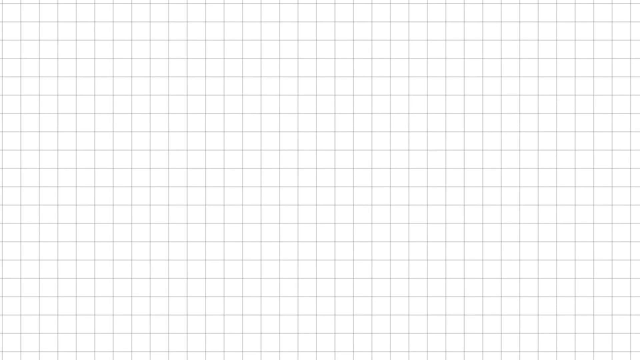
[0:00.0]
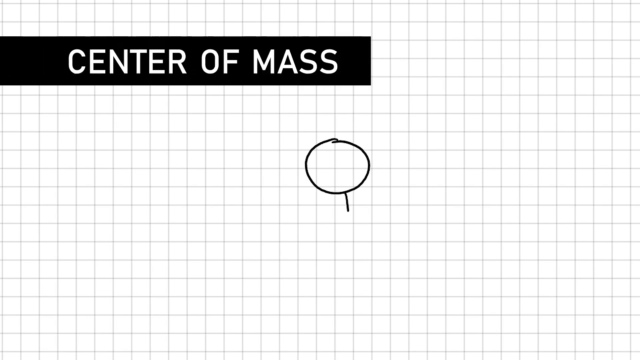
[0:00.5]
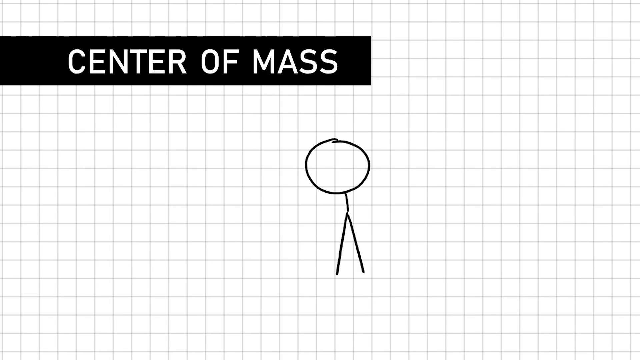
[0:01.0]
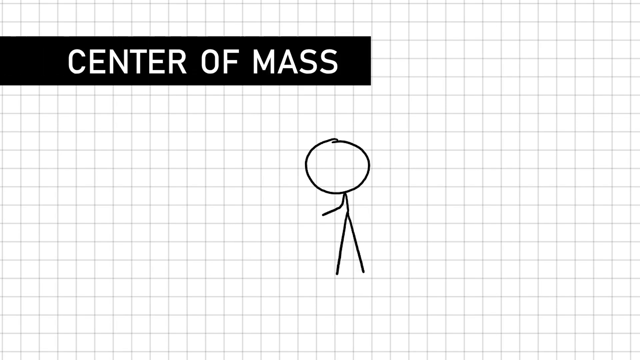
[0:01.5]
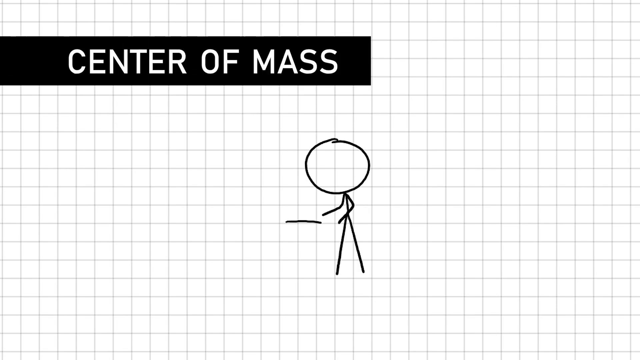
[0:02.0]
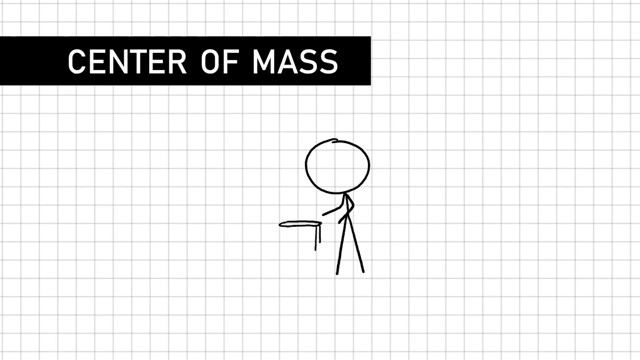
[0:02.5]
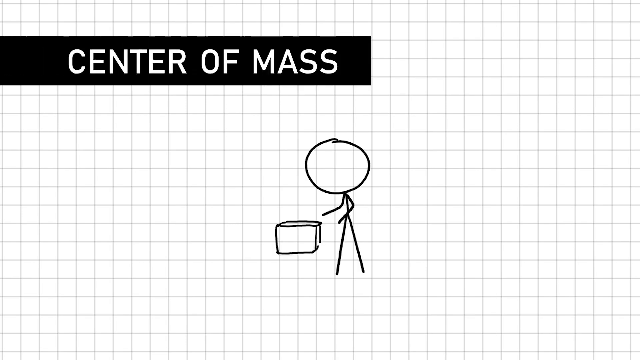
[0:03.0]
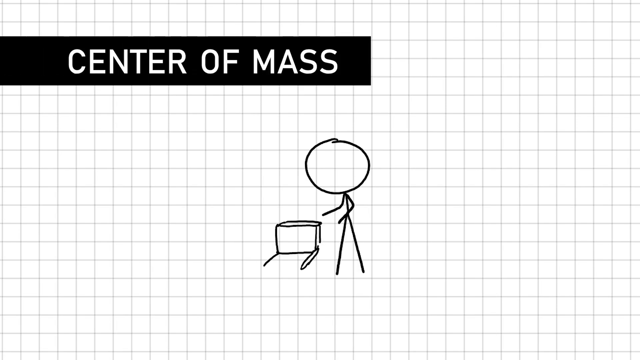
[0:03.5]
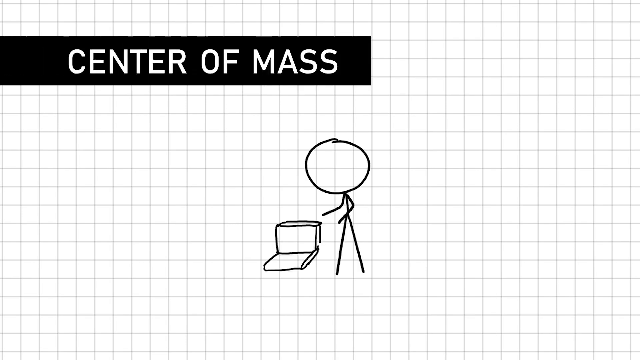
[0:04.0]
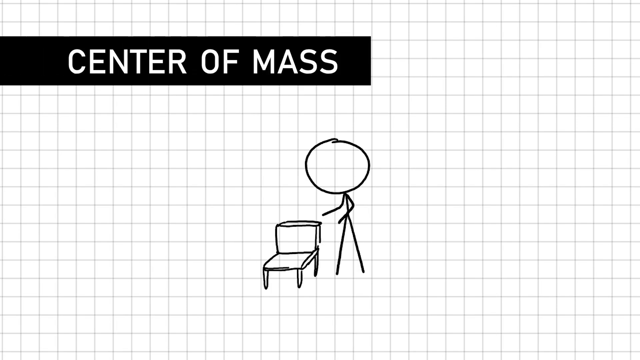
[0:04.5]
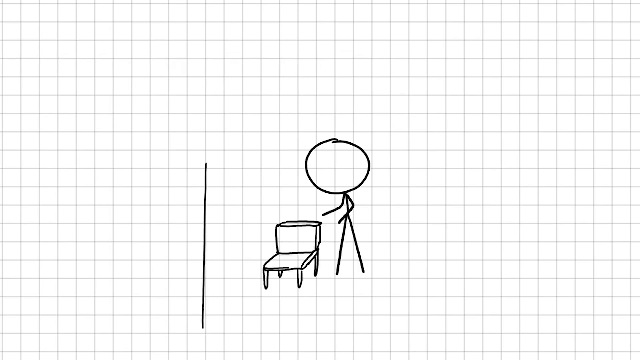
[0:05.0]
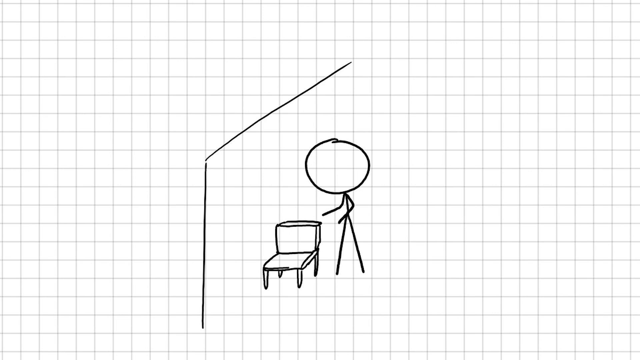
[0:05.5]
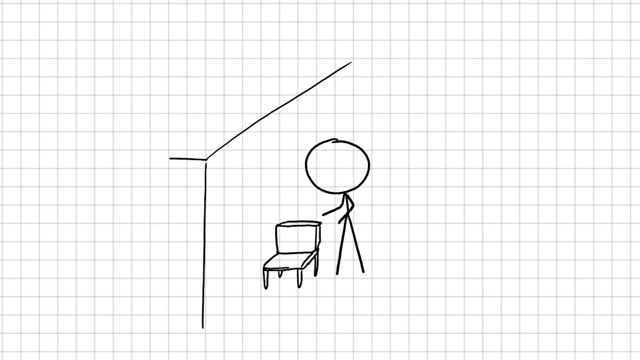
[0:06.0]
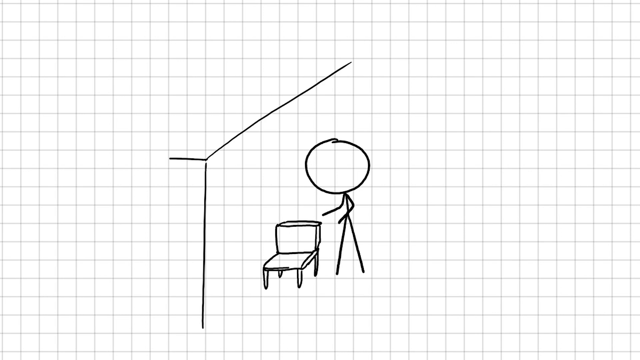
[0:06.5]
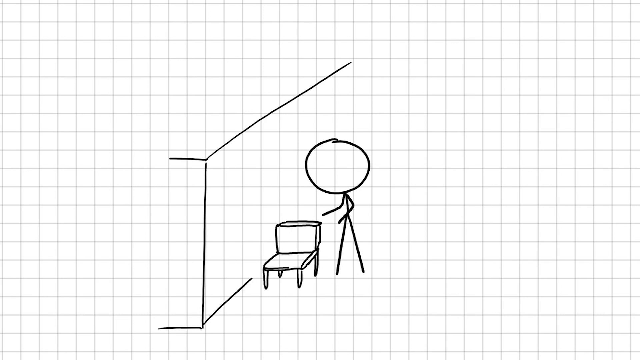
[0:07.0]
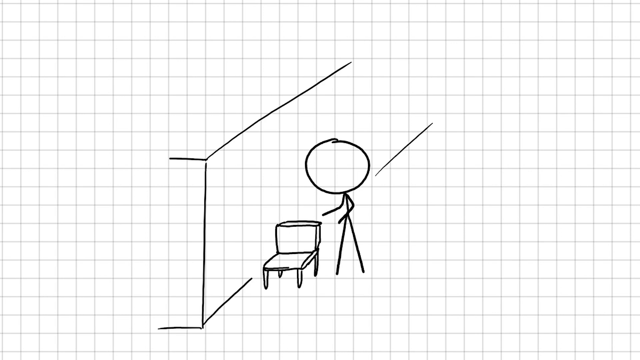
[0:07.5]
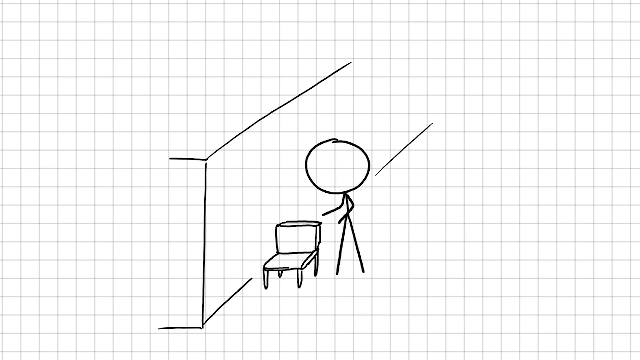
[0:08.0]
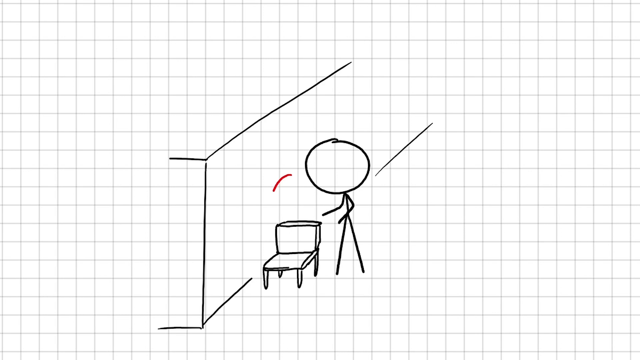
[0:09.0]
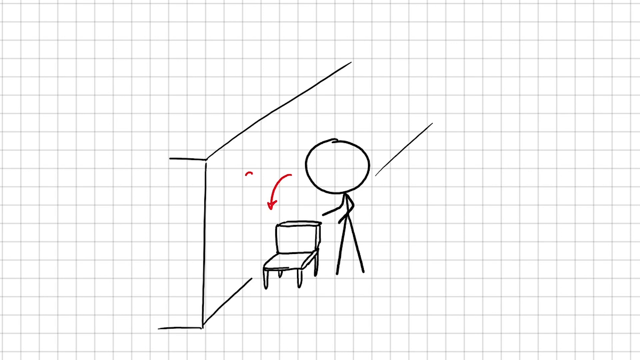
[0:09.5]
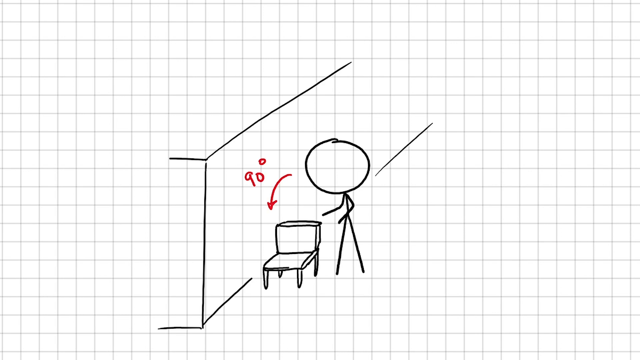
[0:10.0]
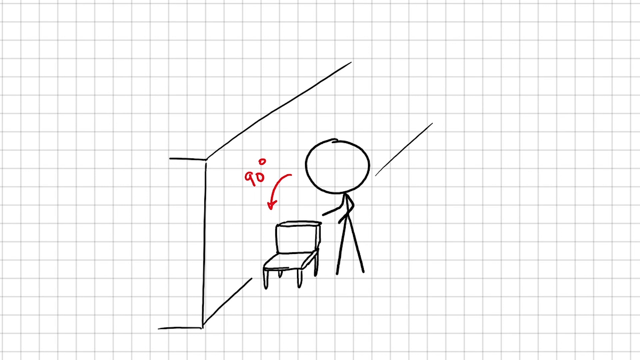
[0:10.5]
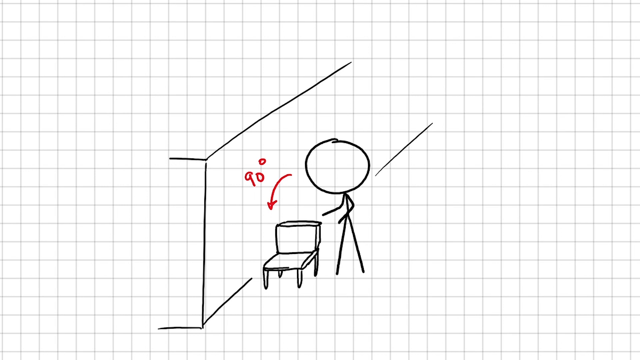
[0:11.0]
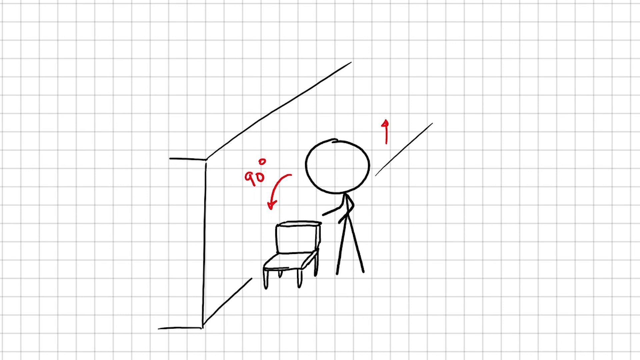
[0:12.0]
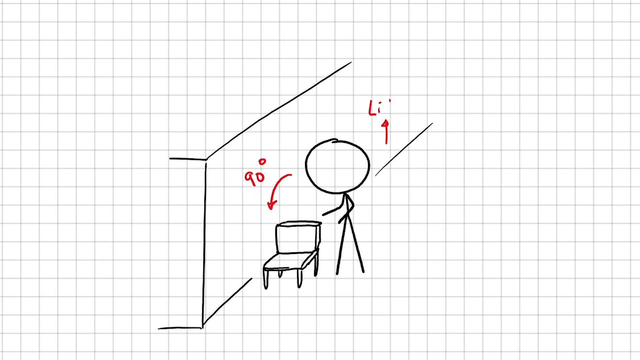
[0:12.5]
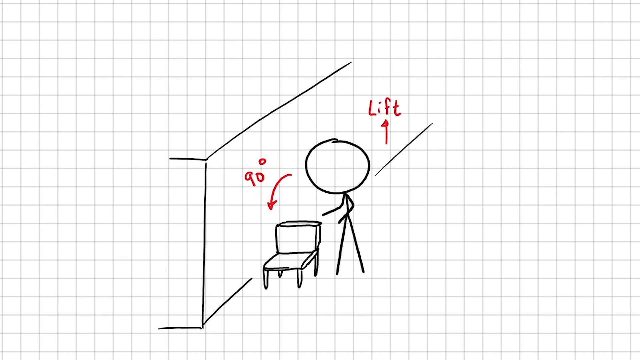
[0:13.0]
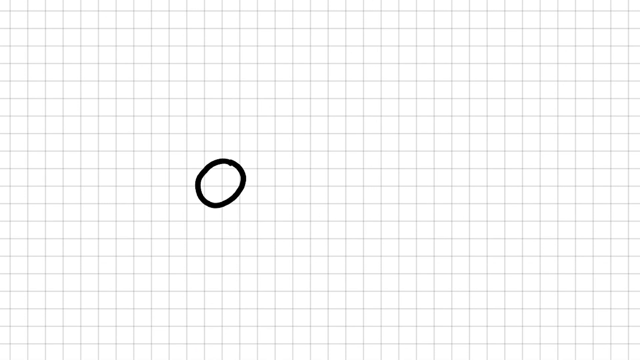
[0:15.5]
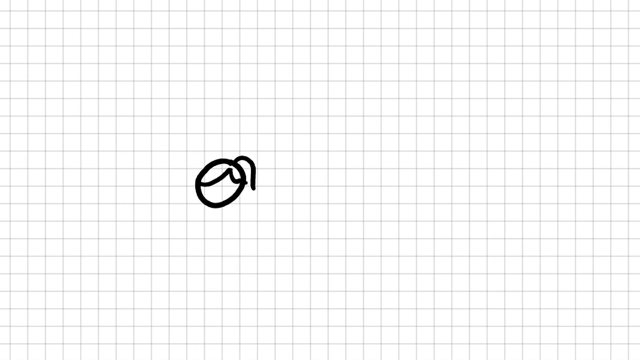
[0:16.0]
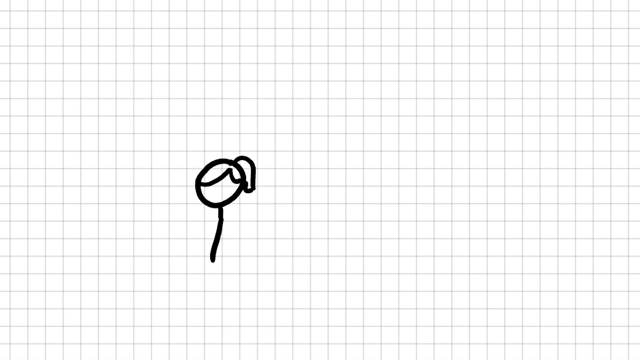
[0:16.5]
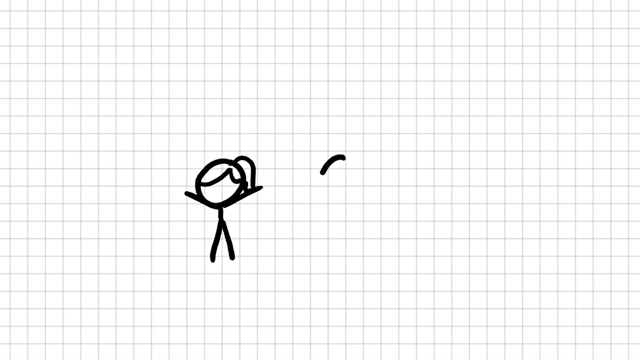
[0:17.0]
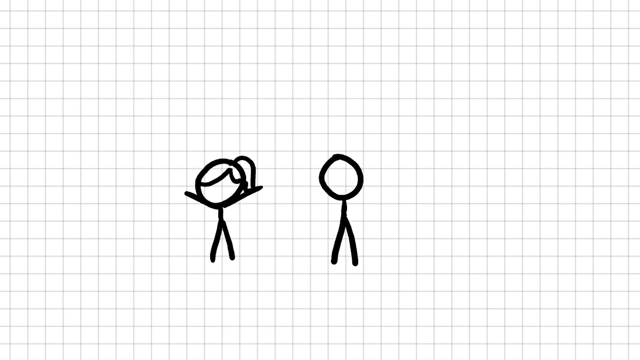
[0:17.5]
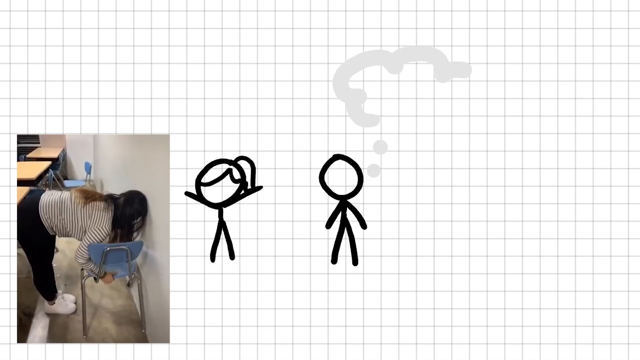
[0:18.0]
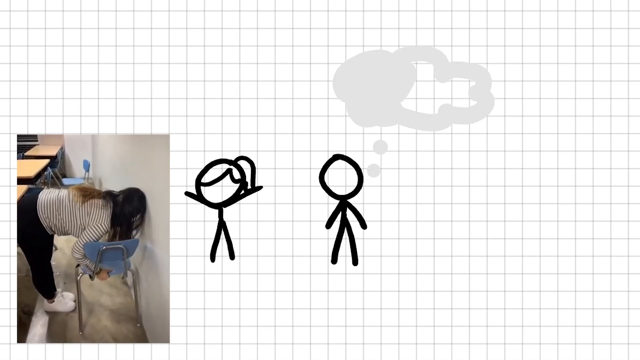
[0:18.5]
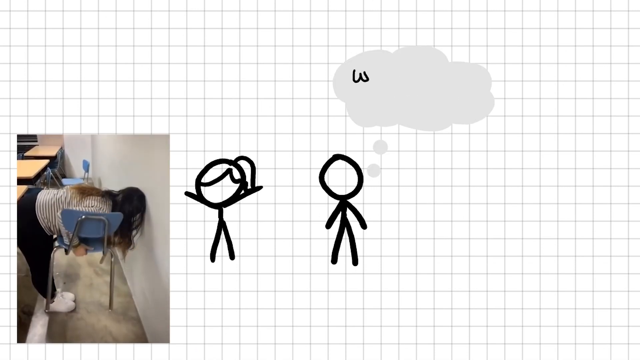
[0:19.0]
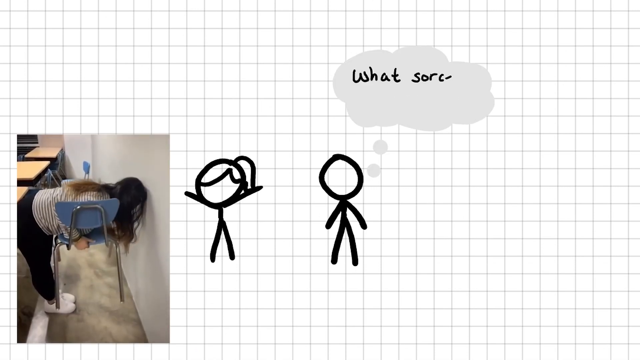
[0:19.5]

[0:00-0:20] The video concerns center of mass, a physics topic about the balancing of different objects. It shows a character with a chair in front of it. Two characters appear, and letters on the screen read "what sorcery is this".